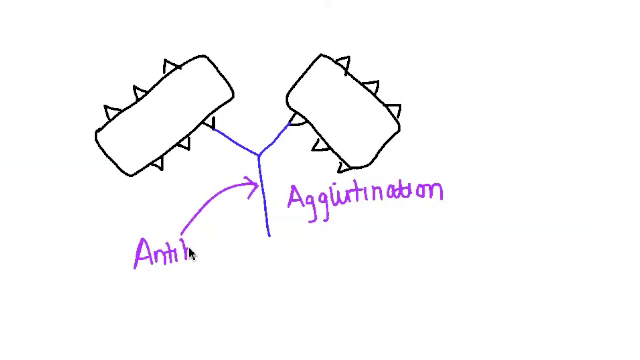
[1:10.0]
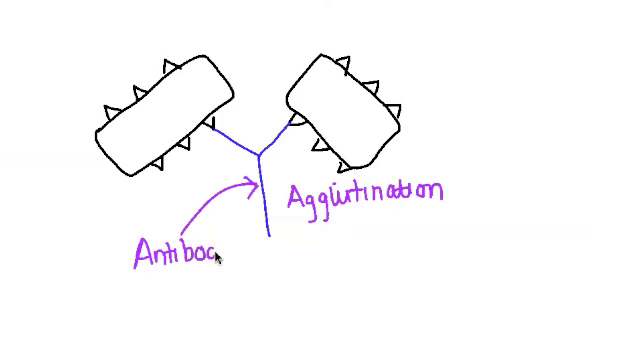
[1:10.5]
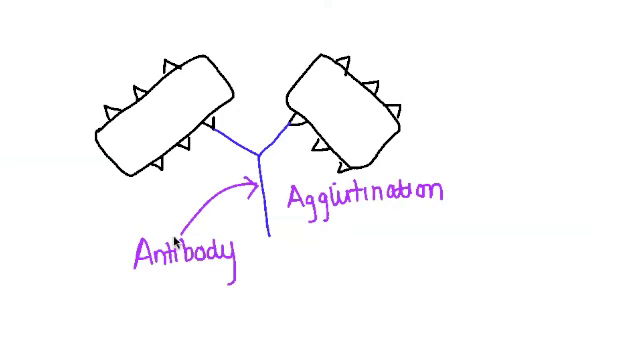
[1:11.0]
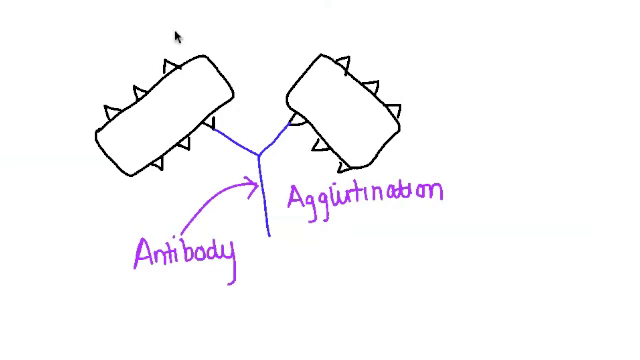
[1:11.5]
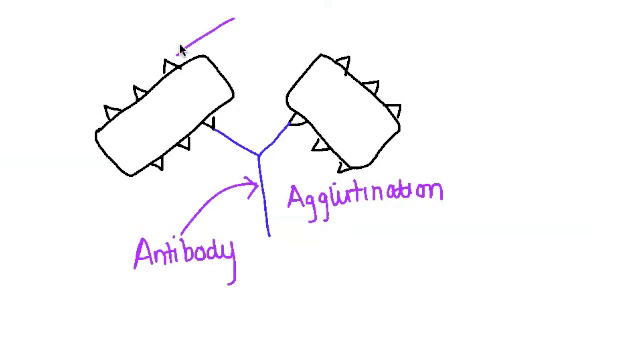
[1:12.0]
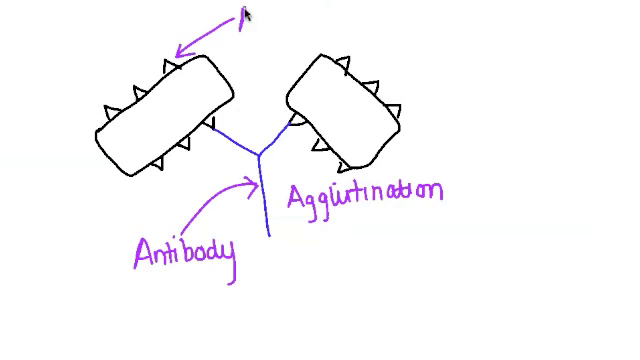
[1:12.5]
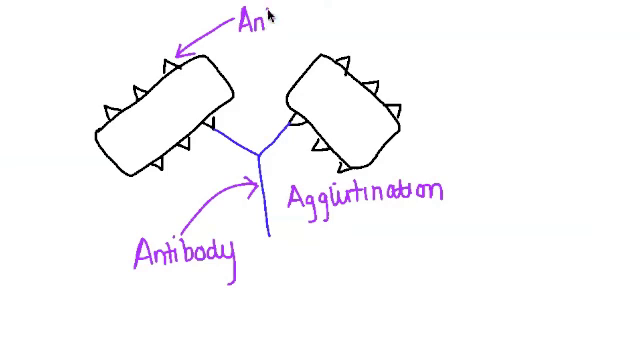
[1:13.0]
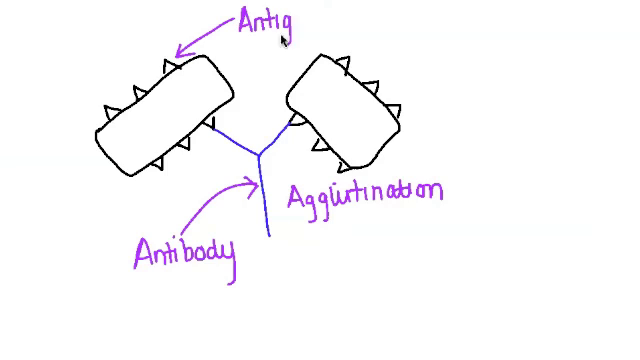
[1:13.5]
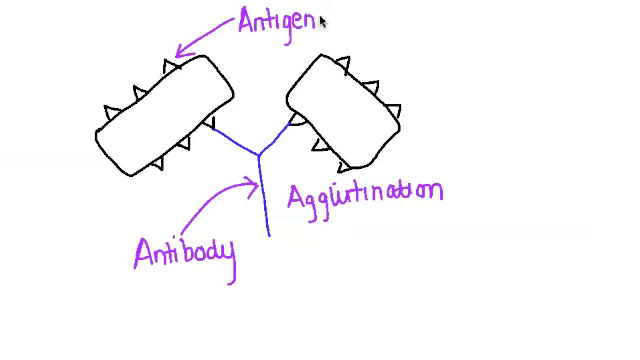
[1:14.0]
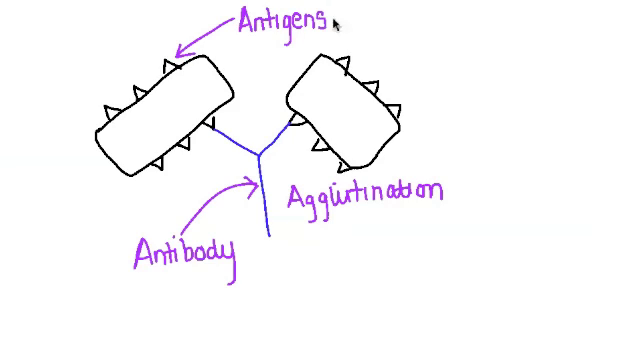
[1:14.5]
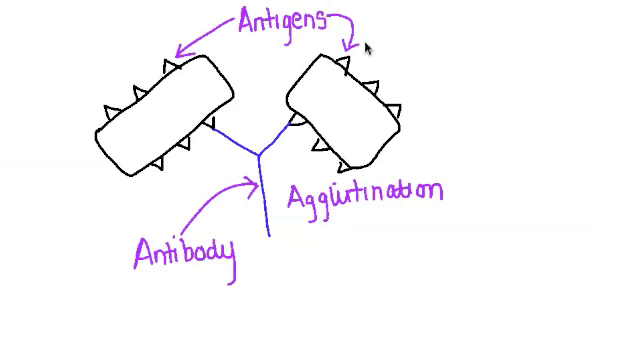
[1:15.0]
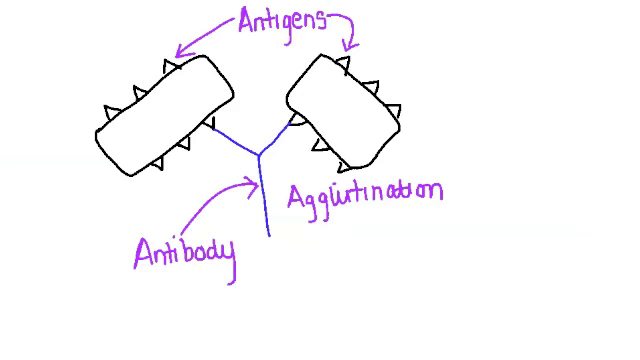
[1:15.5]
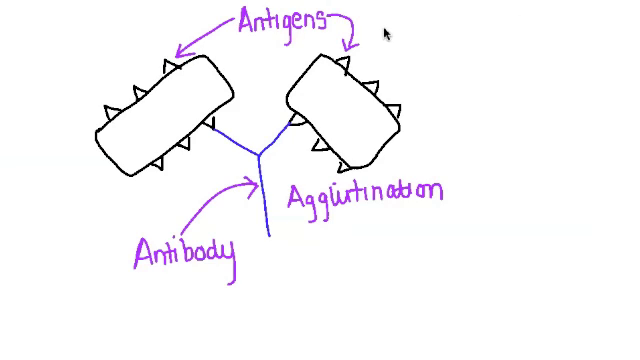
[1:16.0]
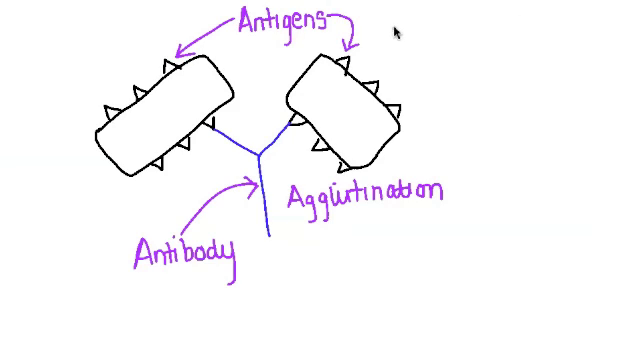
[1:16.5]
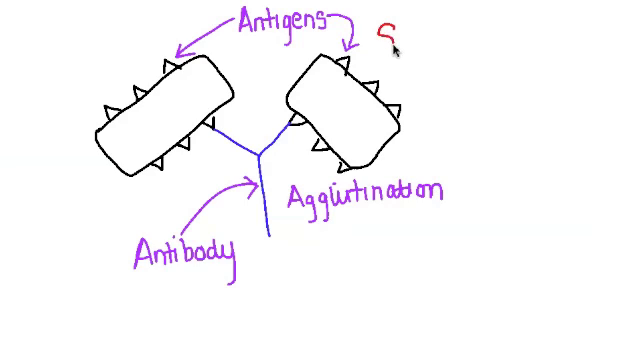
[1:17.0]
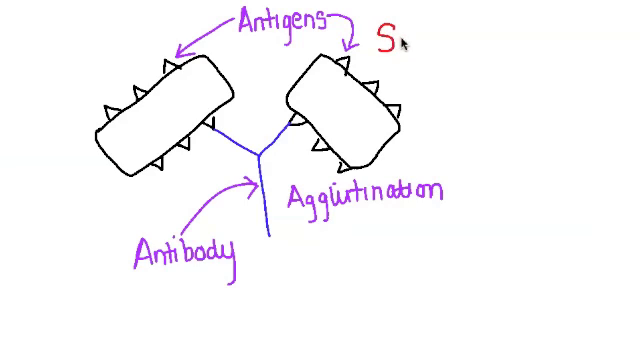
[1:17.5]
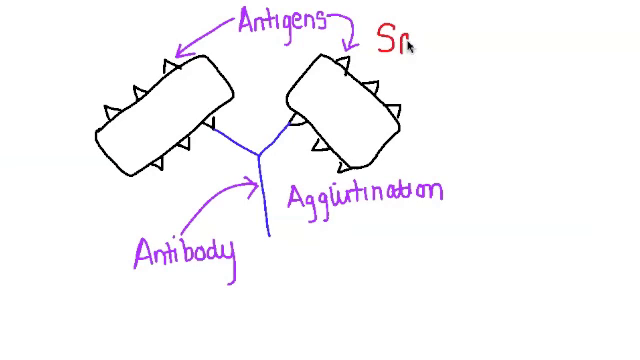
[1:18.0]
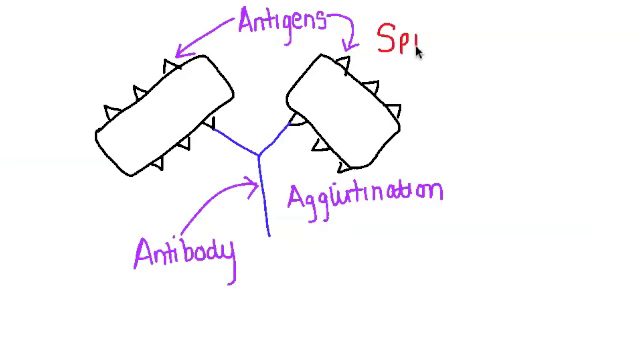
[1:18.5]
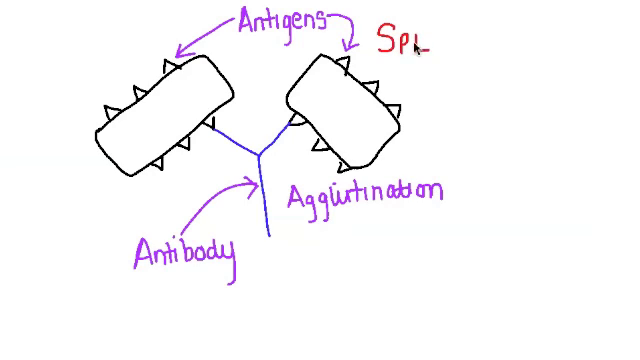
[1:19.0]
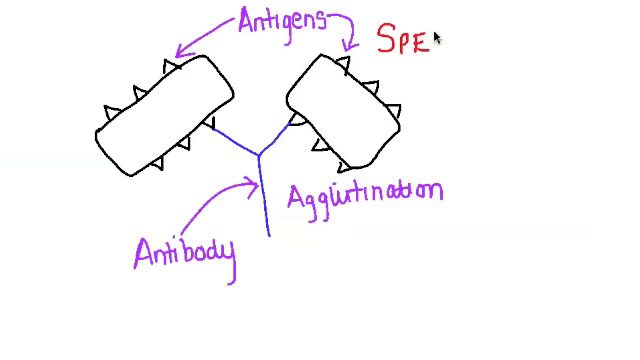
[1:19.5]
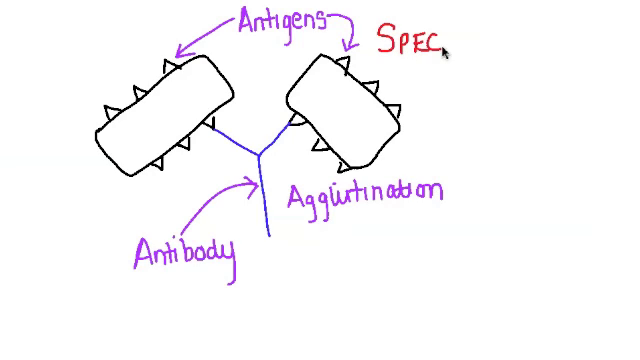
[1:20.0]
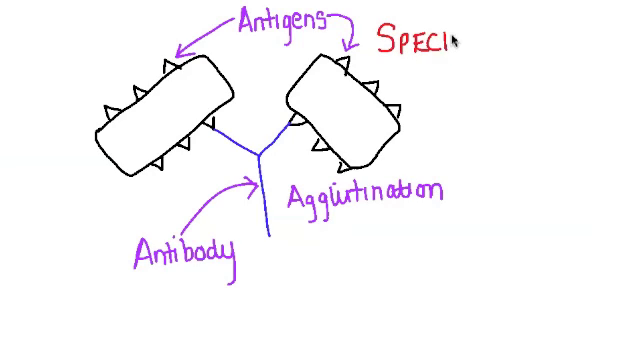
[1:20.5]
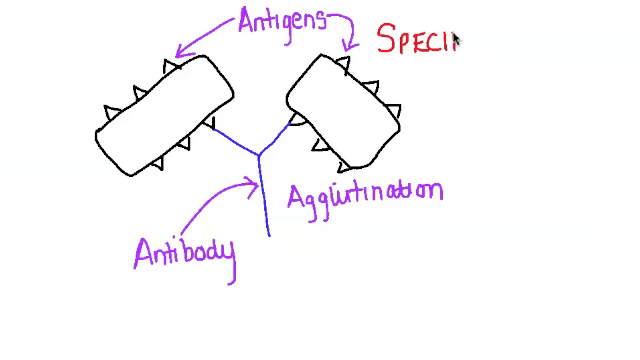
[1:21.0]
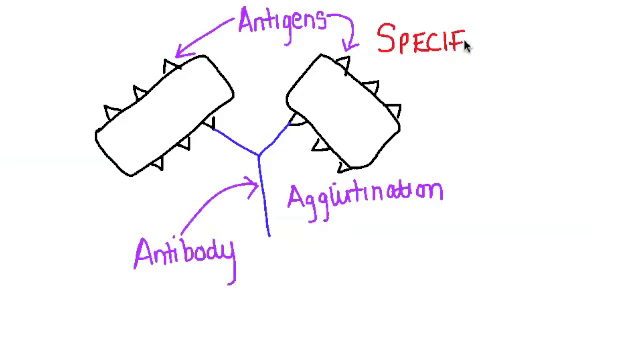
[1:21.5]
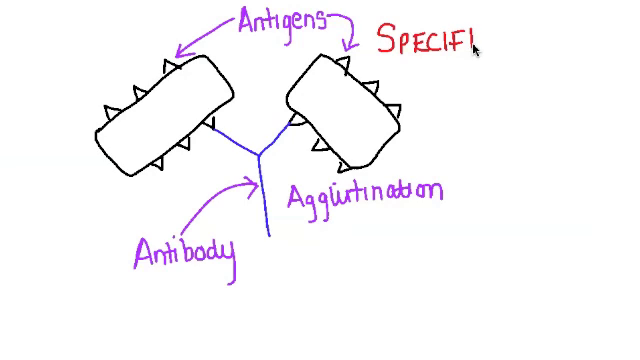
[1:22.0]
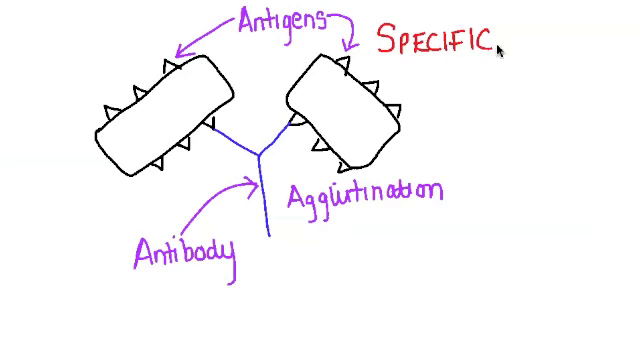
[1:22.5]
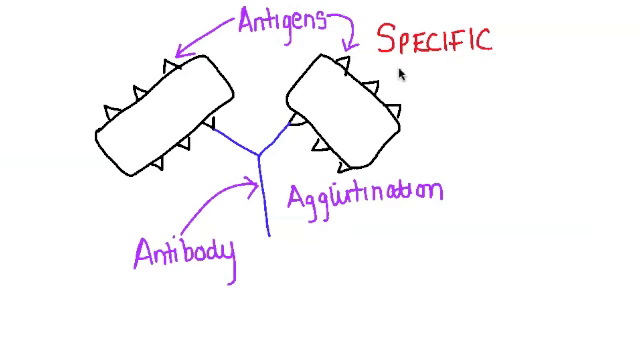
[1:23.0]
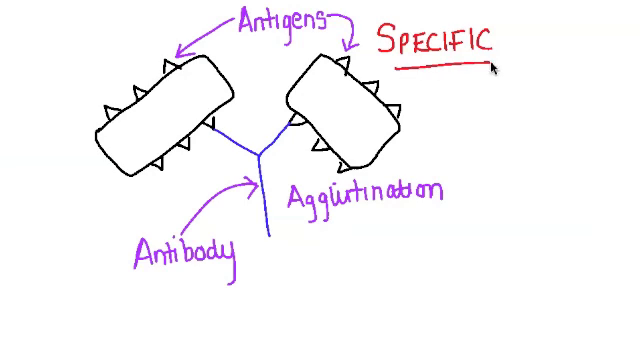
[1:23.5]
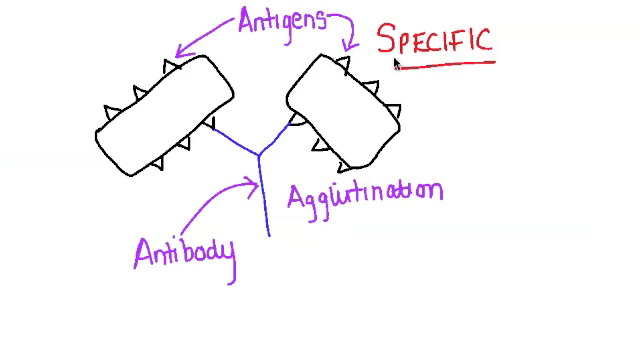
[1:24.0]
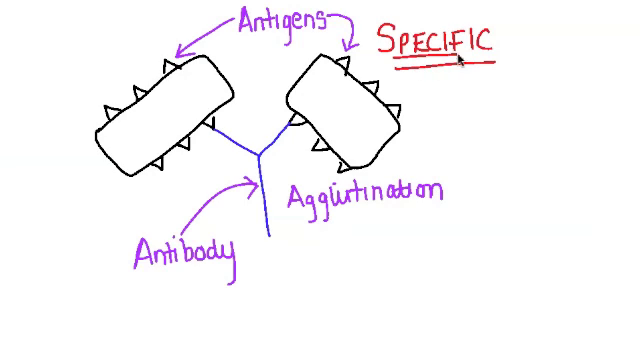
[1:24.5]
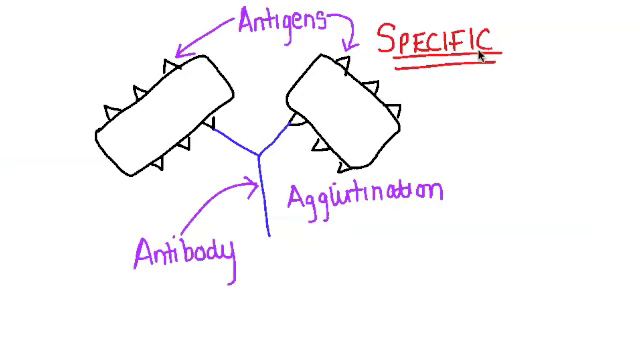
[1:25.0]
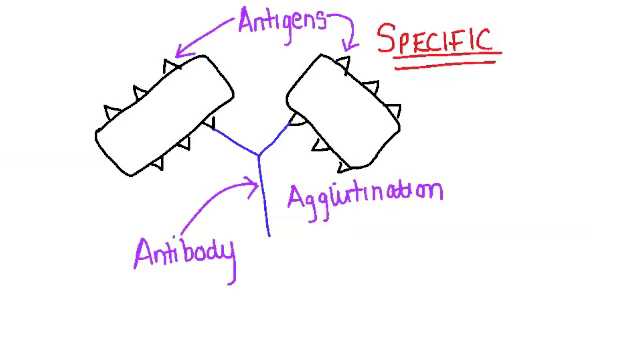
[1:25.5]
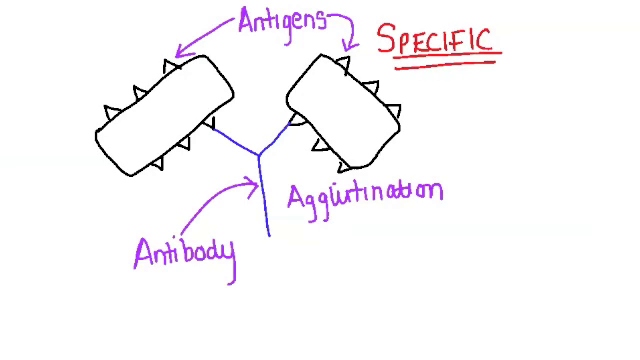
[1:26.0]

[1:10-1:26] Two upward-facing rectangles are drawn in black, kind of diagonal, each with three triangles drawn on the top and bottom, and they are connected by a blue Y. On one side, "agglutination" is written in purple, and on the left side, under the diagonal black rectangle, "antibody" is being written, with an arrow pointing to the bottom of the blue Y. At the top middle of the screen, "antigens" is written in purple, with arrows pointing to the triangles on top of each of the drawn black rectangles. In red, the arrow then writes the word "specific" on the right side and underlines it twice in red, apparently to emphasize that this is specific to how it works. The video then ends. The background is solid white.